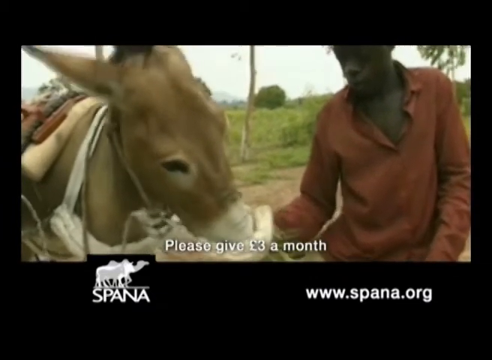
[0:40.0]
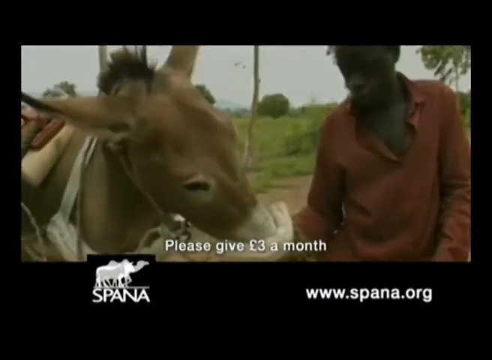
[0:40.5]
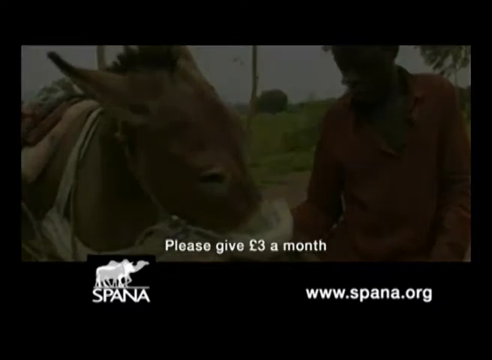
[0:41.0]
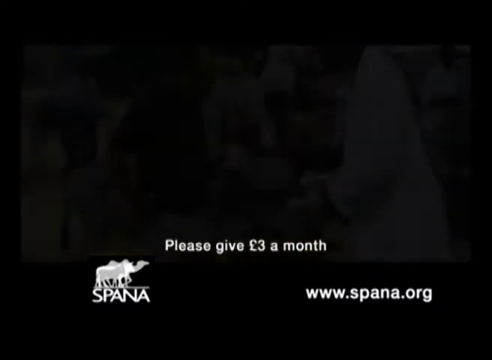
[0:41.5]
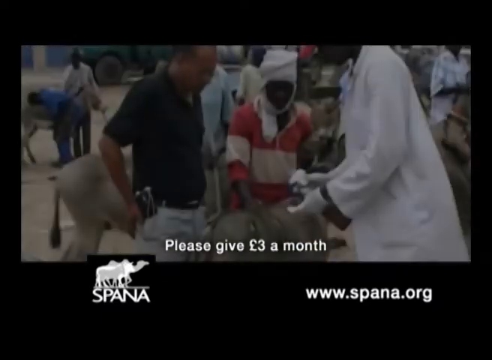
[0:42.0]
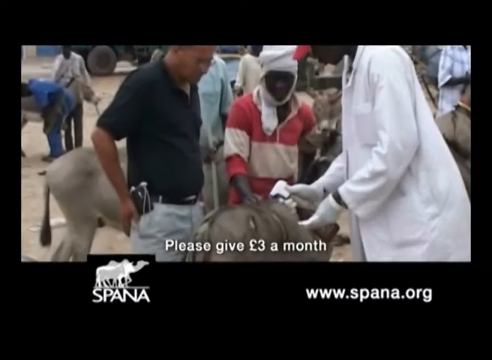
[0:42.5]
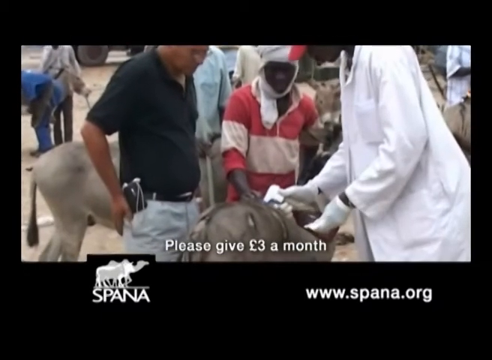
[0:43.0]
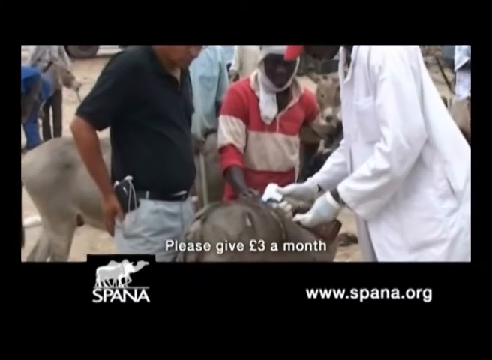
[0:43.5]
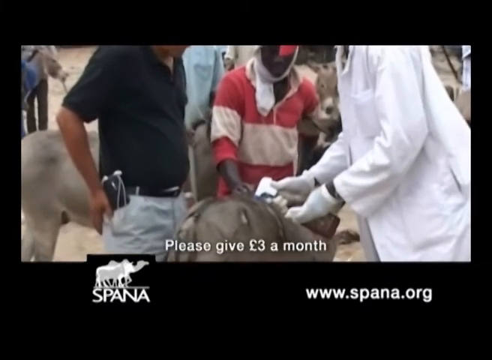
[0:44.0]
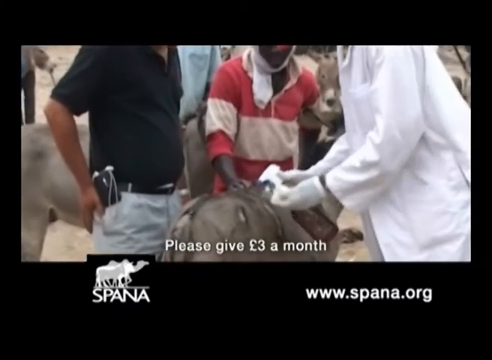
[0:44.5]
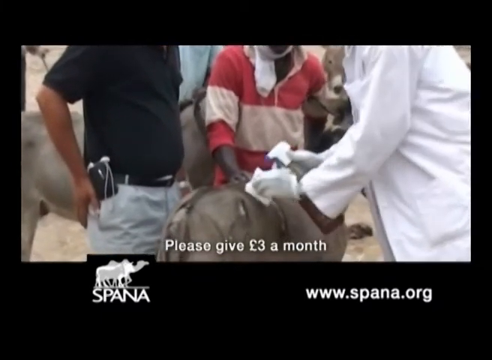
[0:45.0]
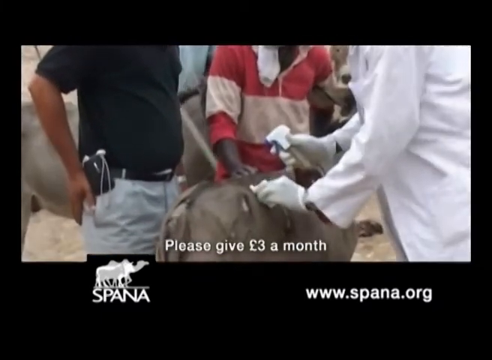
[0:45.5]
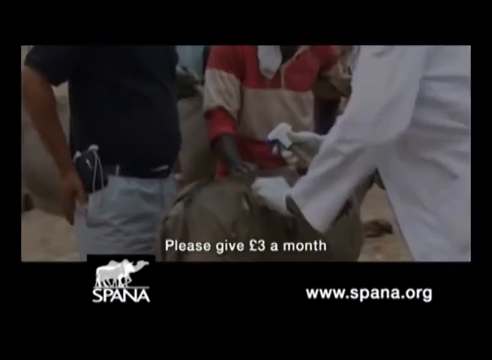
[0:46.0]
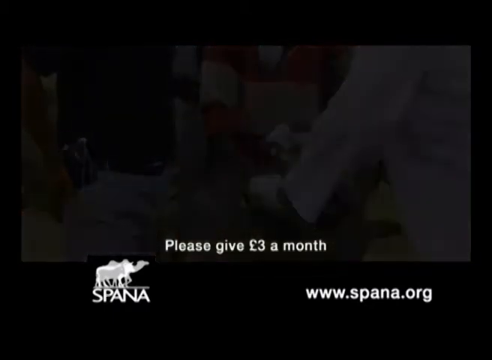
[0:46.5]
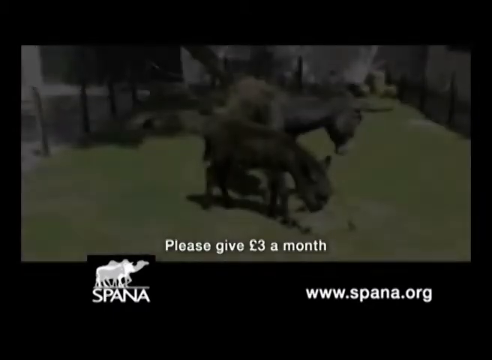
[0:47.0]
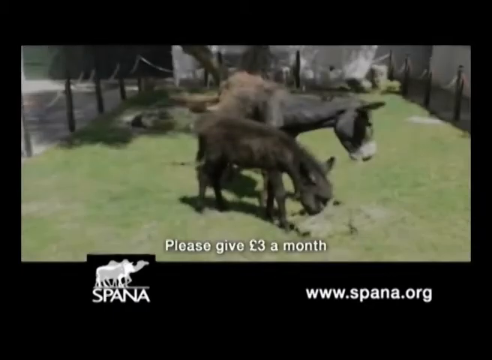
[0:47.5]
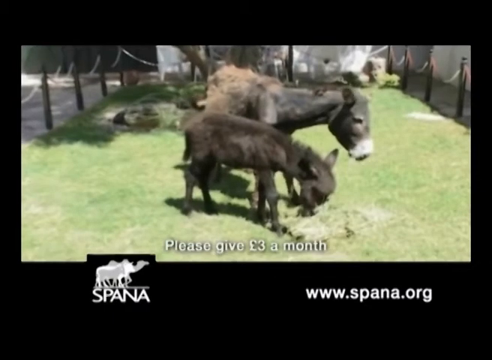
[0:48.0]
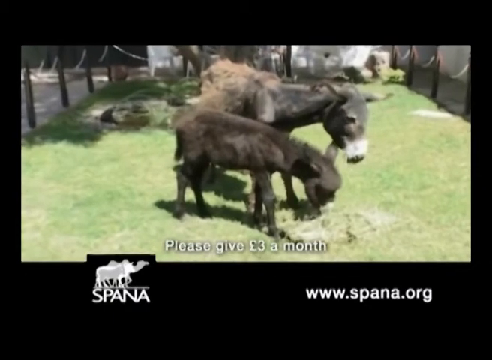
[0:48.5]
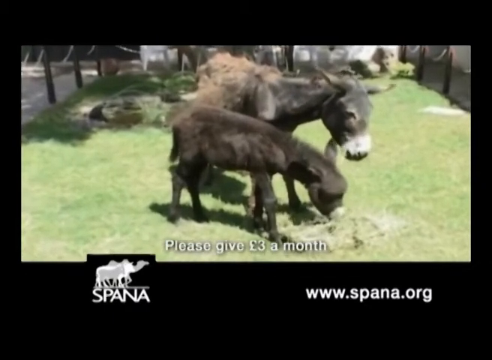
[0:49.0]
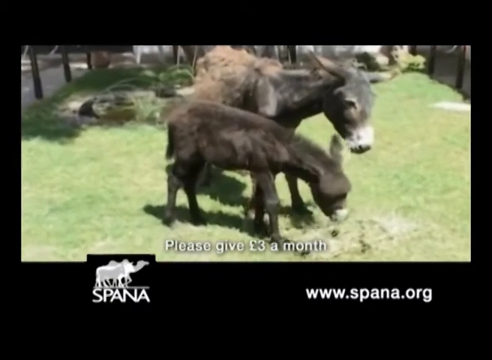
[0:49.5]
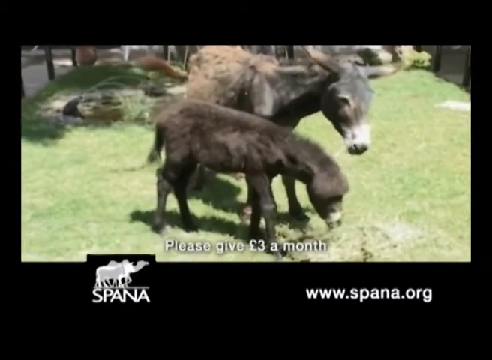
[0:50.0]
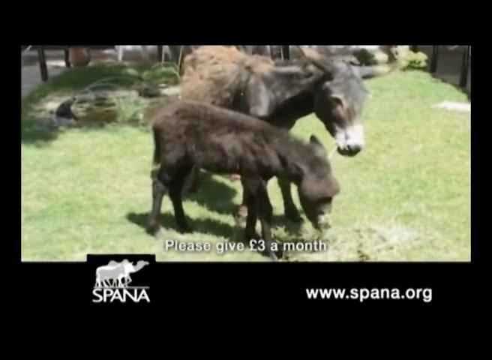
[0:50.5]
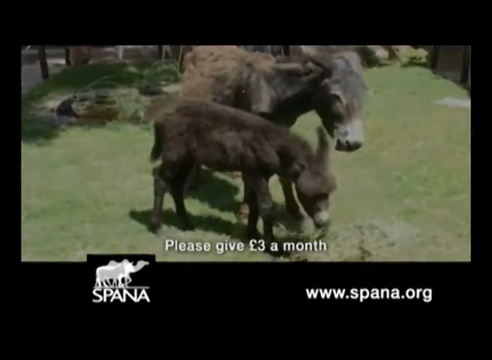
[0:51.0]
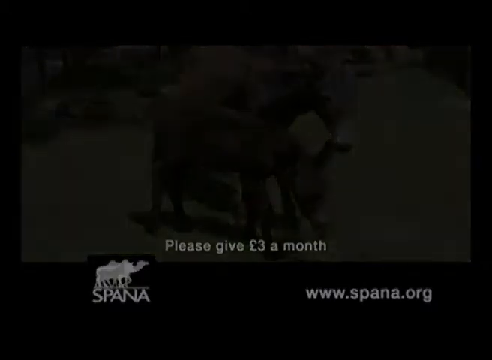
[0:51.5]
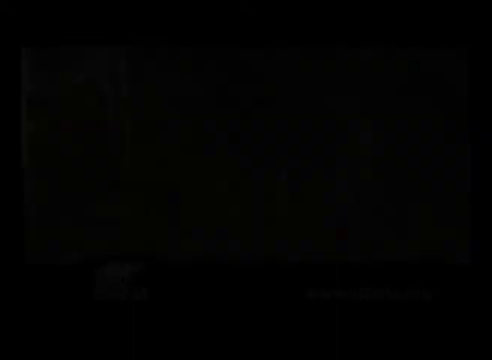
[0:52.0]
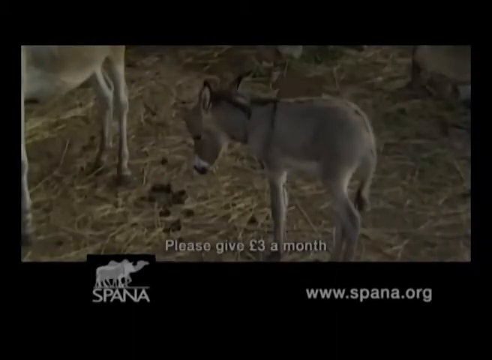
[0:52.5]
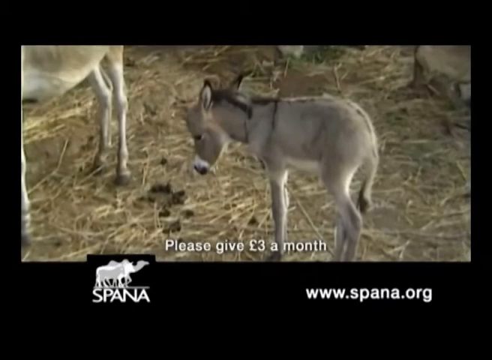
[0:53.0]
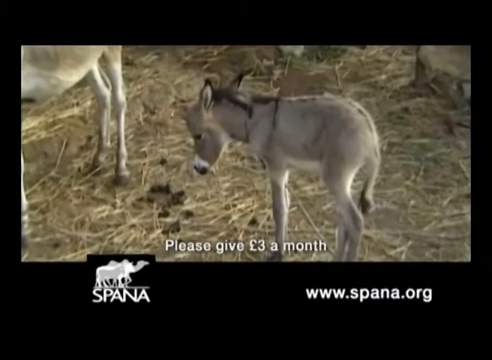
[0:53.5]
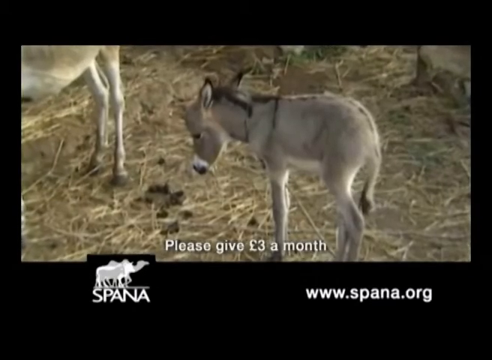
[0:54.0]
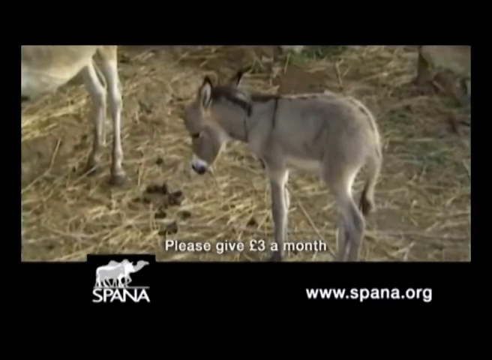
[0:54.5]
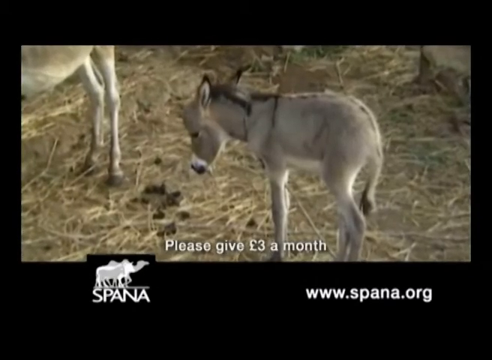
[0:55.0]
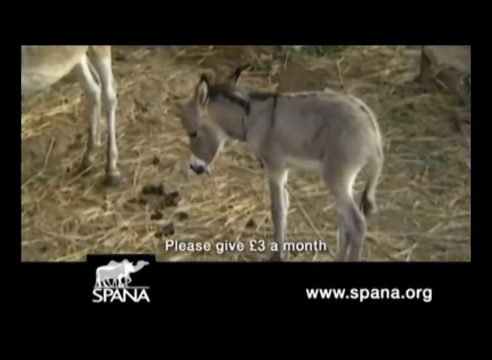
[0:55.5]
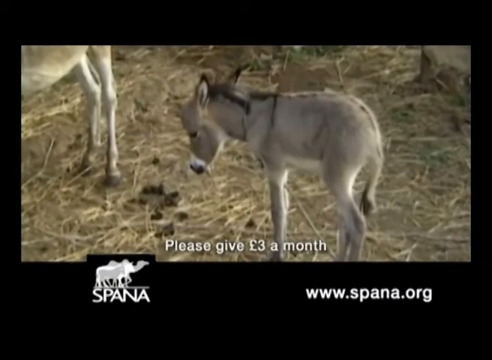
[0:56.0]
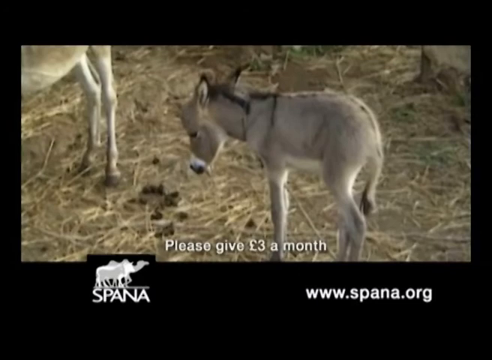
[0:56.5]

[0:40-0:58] An injured donkey appears that looks underweight, as if it has not been eating well. Text reads "please give £3 per month". A doctor is busy treating the injured donkey.